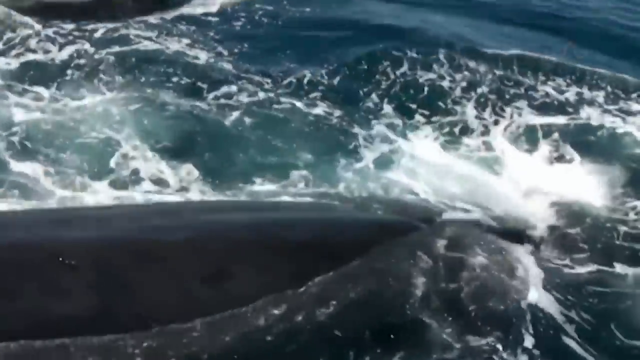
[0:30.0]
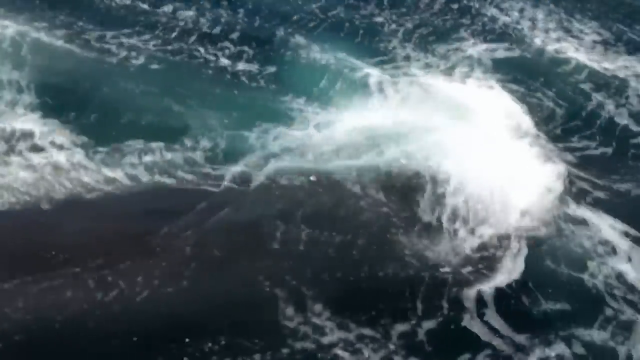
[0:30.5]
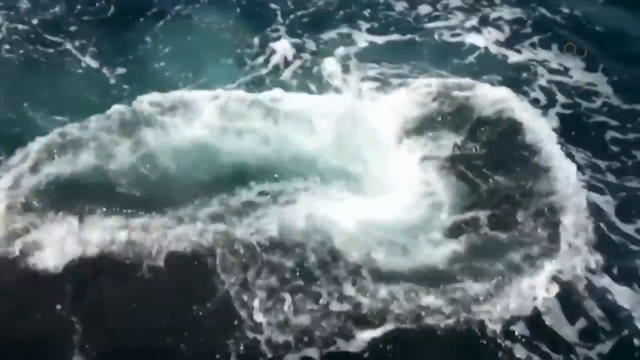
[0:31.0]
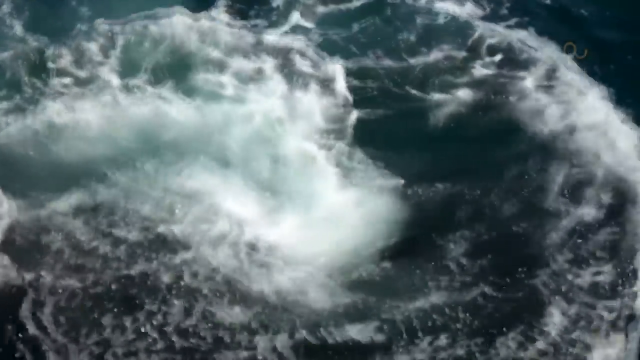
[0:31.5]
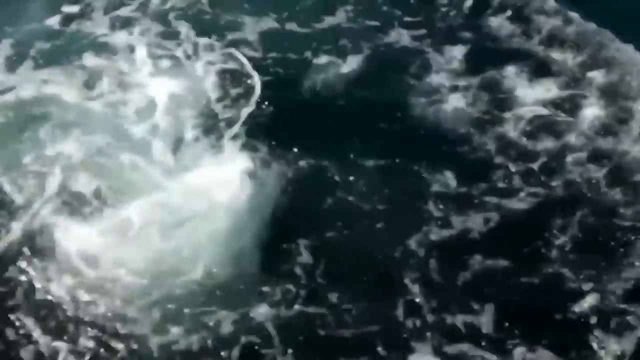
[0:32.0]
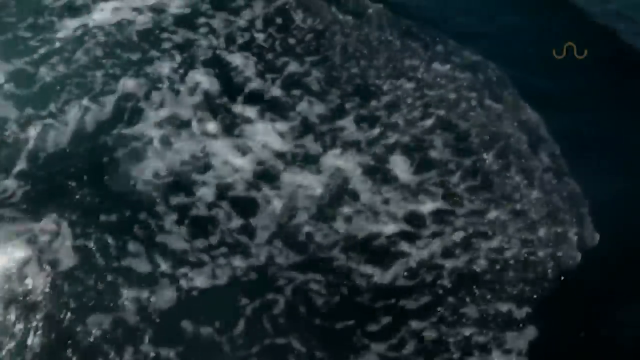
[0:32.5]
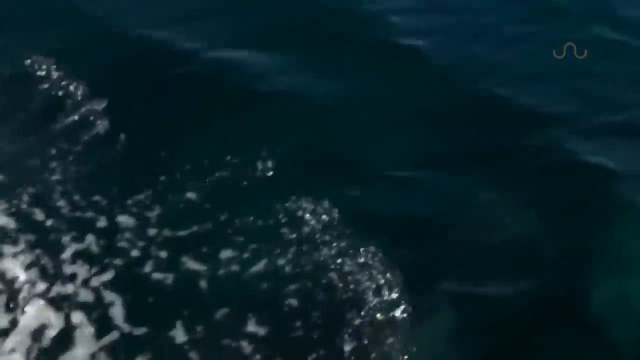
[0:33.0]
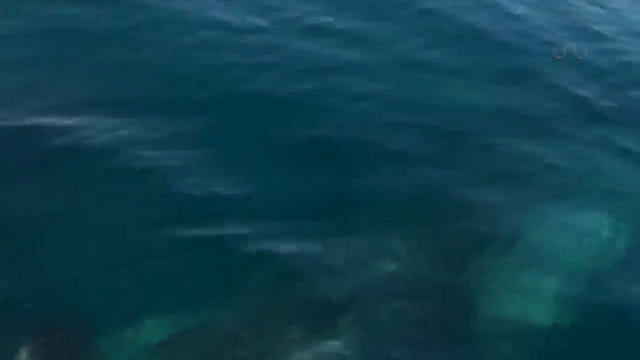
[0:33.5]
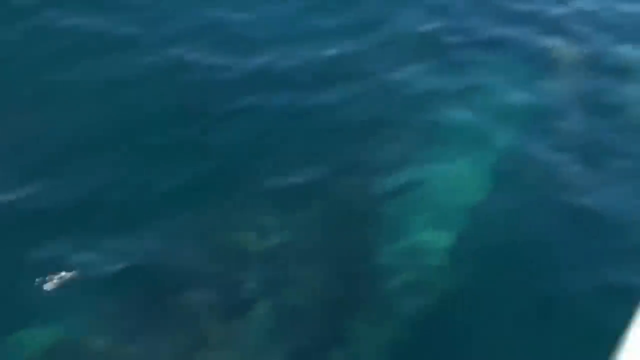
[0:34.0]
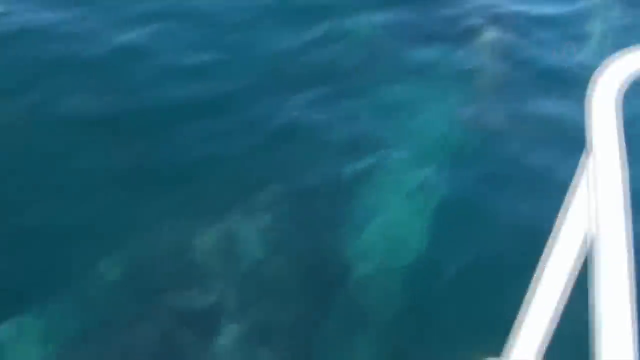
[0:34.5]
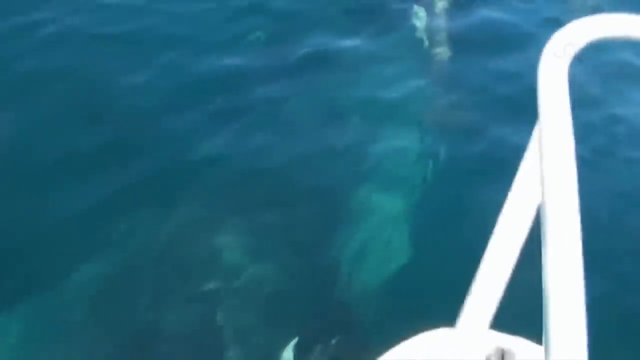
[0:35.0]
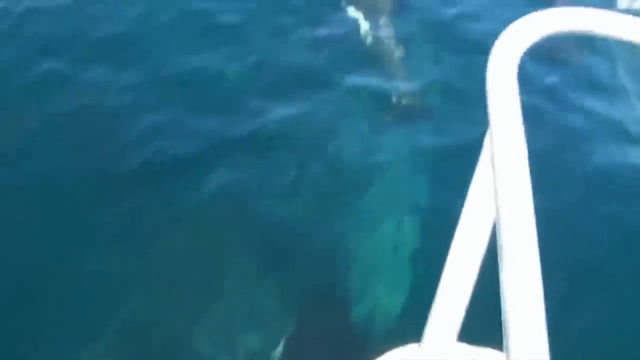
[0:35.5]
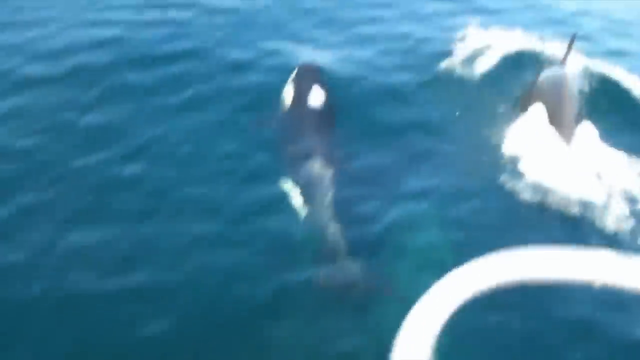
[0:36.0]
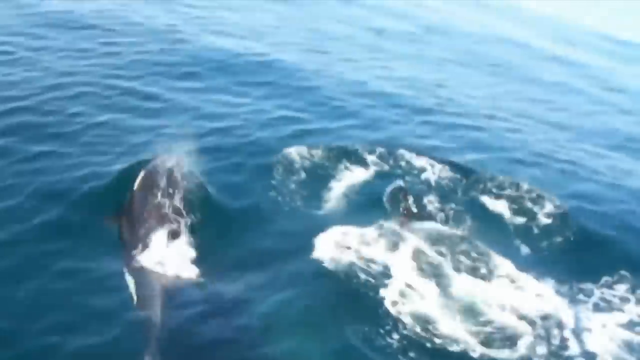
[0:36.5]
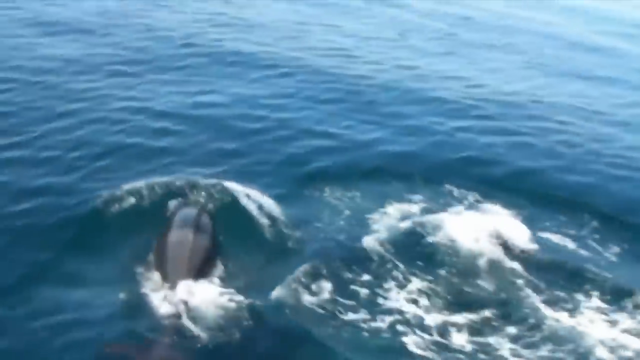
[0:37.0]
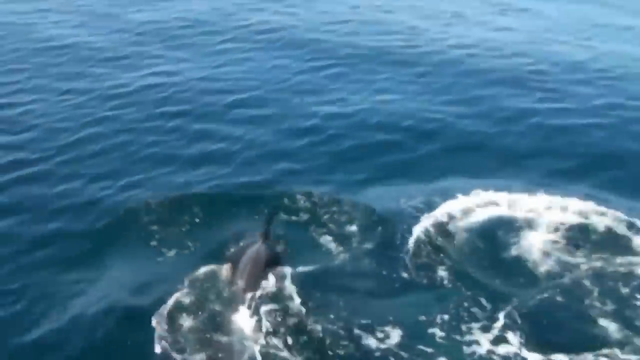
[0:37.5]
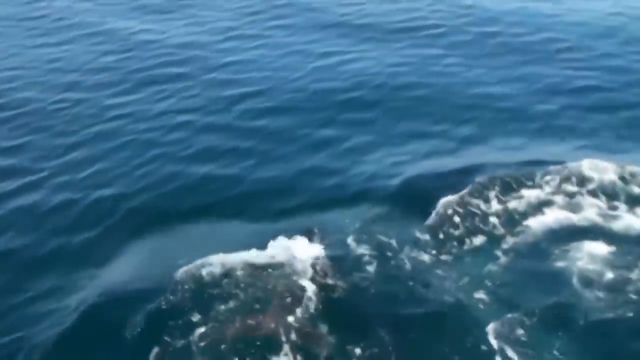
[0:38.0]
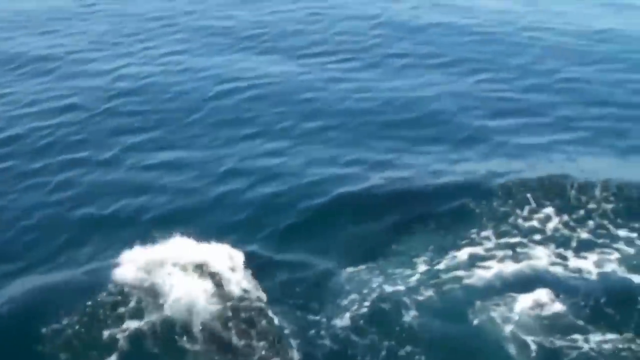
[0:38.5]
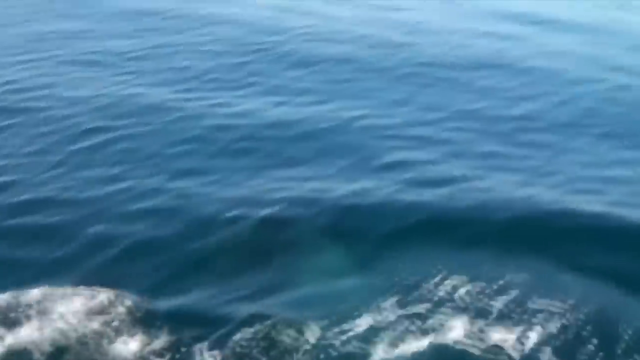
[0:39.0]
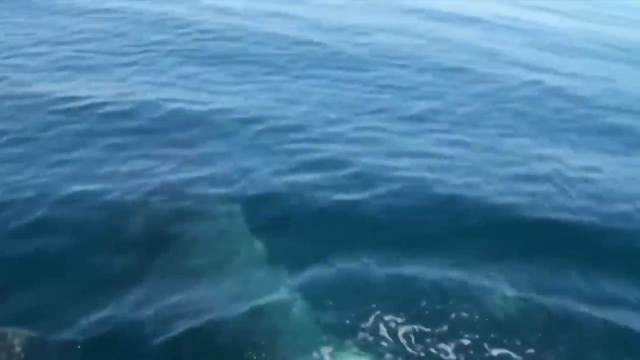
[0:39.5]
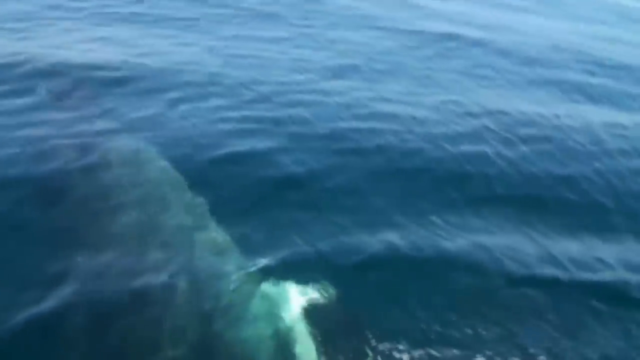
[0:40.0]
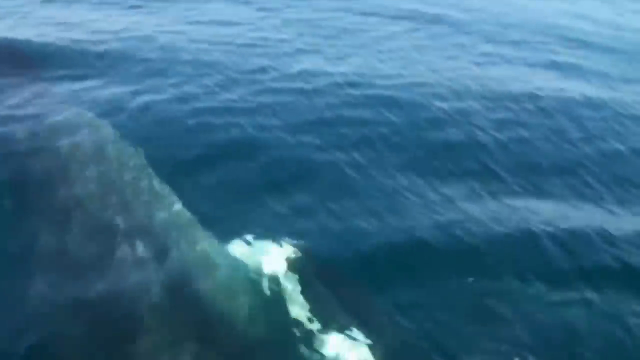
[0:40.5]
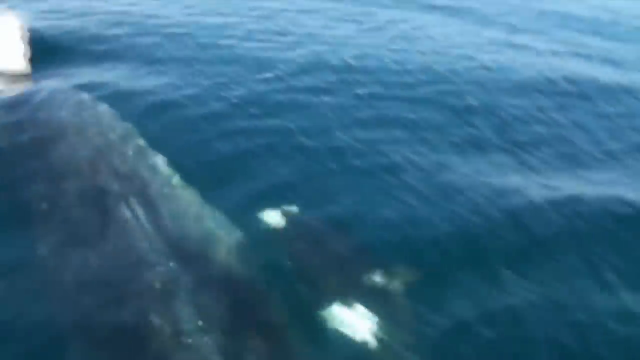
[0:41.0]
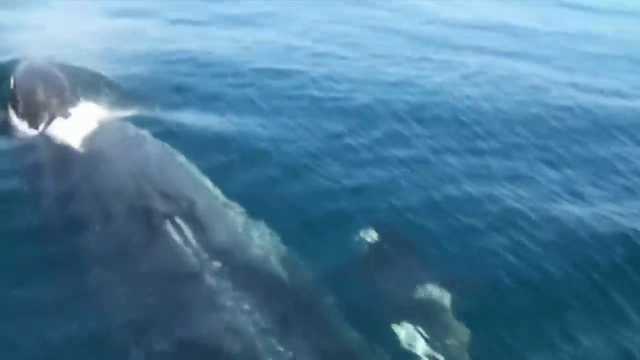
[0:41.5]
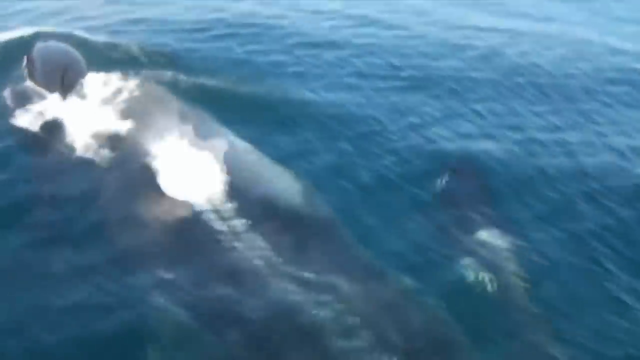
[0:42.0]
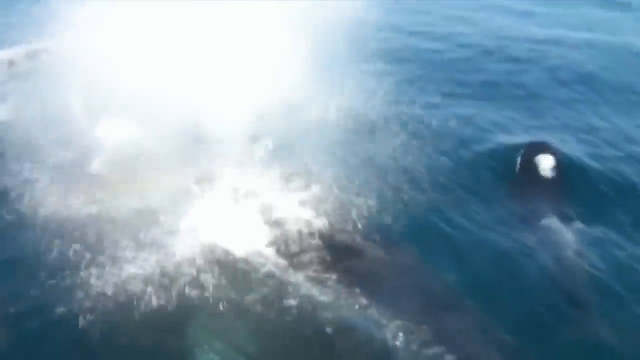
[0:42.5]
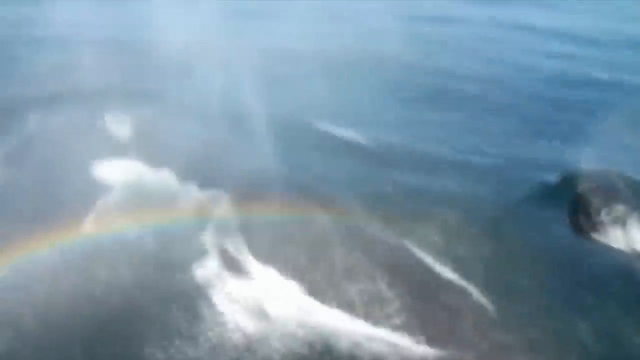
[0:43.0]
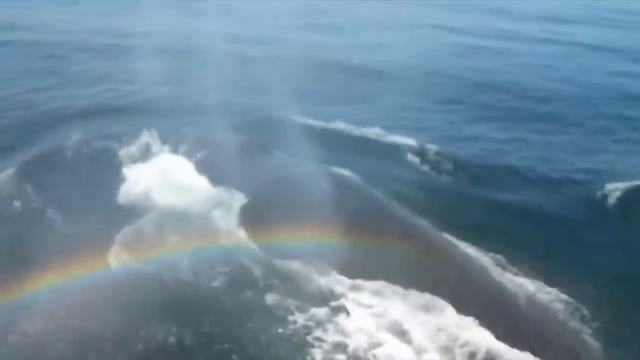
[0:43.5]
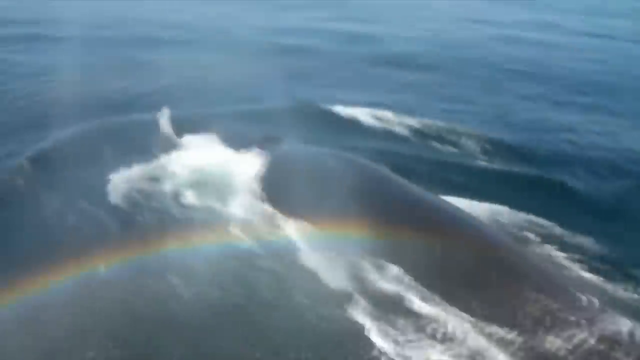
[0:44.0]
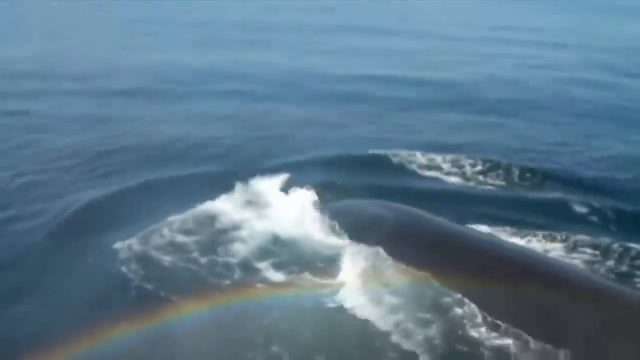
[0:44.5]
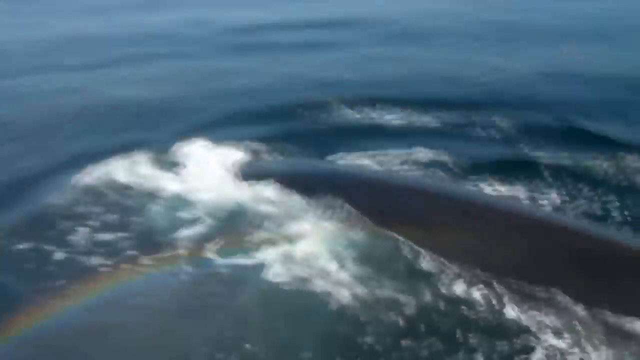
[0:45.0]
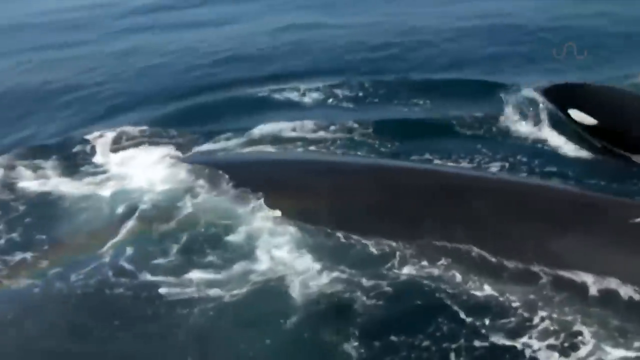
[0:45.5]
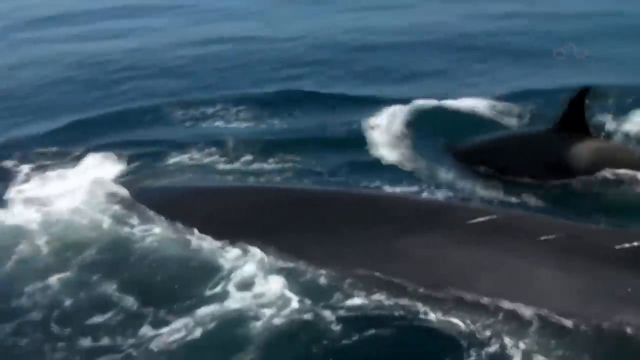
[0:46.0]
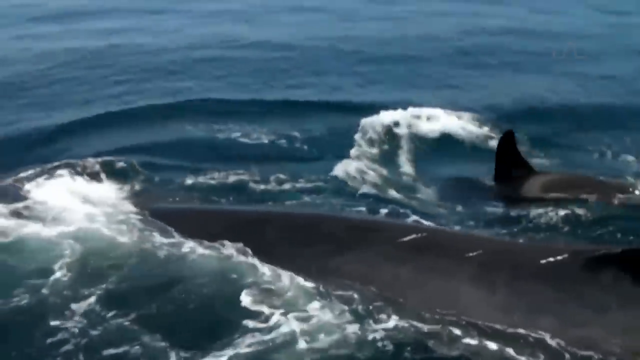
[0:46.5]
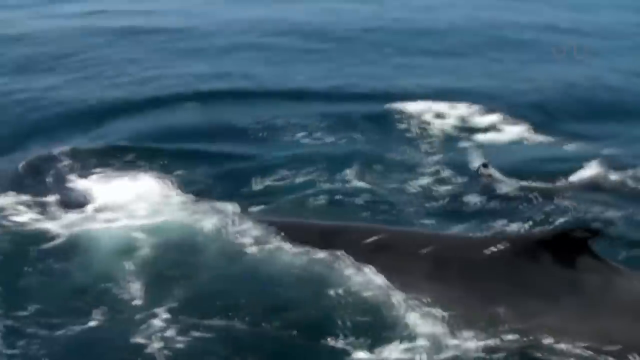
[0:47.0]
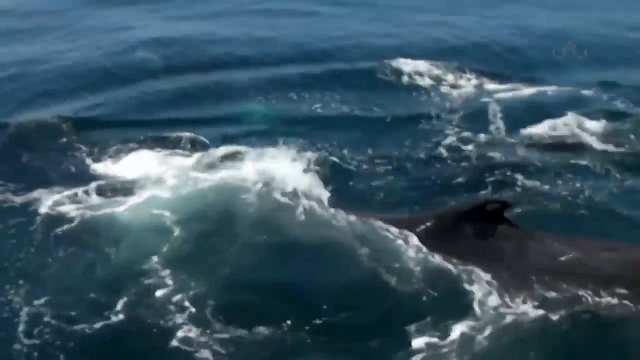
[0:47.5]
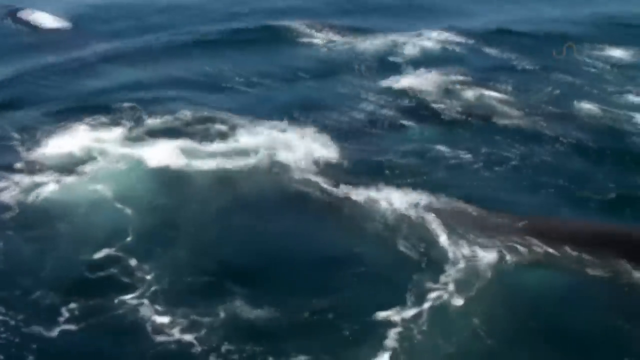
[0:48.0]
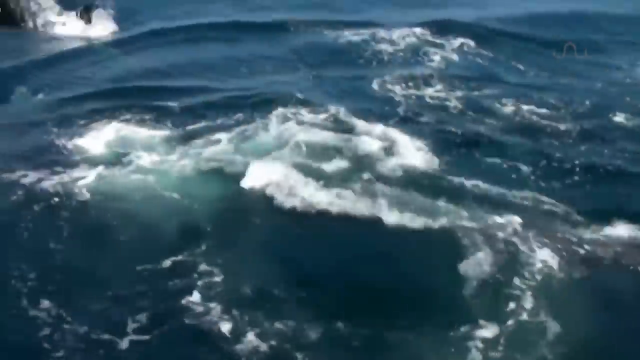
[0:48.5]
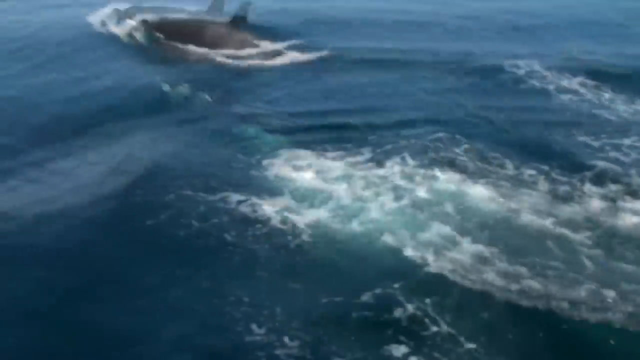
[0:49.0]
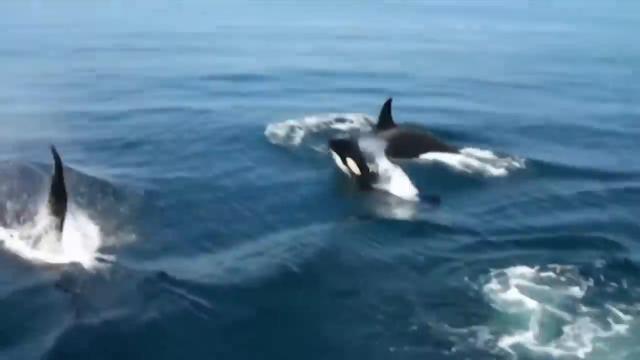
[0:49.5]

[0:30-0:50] An orca disappears below the surface as it swims along the side of the boat. It continues swimming, now in front of the bow of the boat, and joins several other whales. It keeps breaching the surface and disappearing back below, and as each whale does so, a large splash of water erupts as it goes under. Even when the whales are not exposed, the water is clear enough to see them swimming beneath the surface. There is also a large whale, possibly a humpback or blue whale, that might be in the same pod as the orcas. As it breaches the surface, its blowhole erupts in a huge spray of water that forms a little rainbow, and it then dives back beneath the surface. The orcas continue swimming alongside this very large whale; as it dives, the orcas breach the surface, and they keep swimming parallel to it.